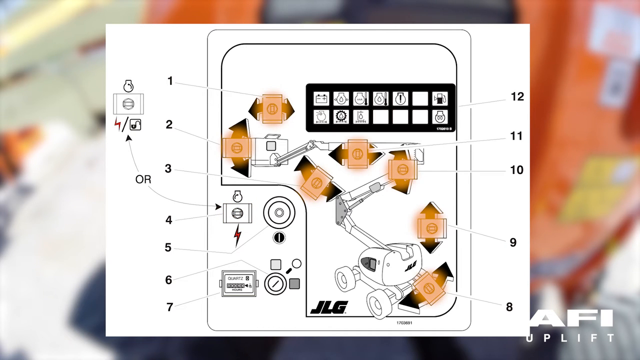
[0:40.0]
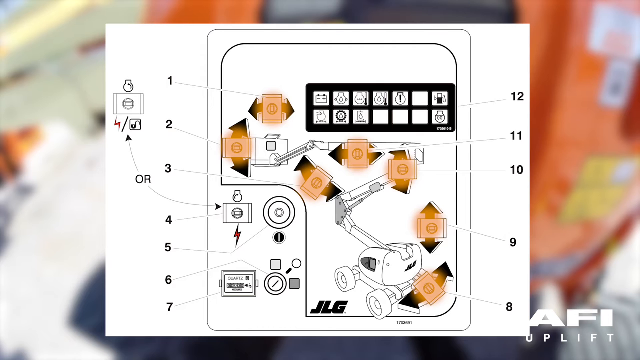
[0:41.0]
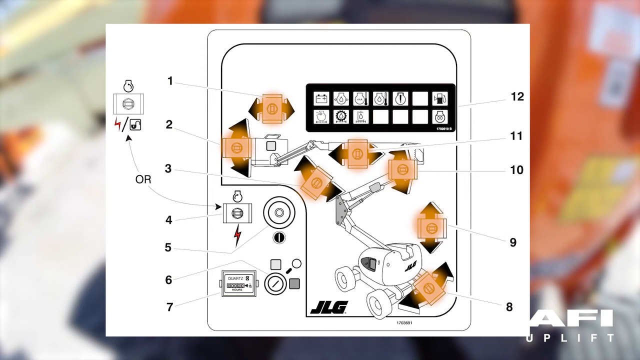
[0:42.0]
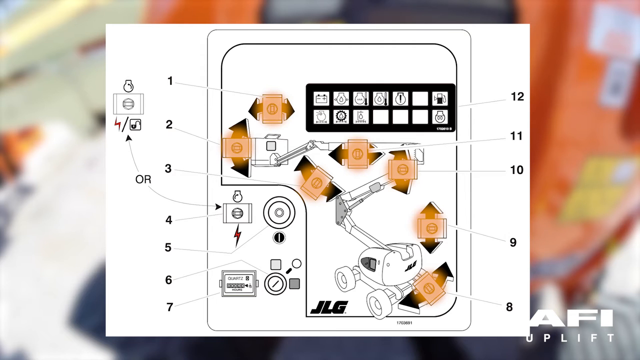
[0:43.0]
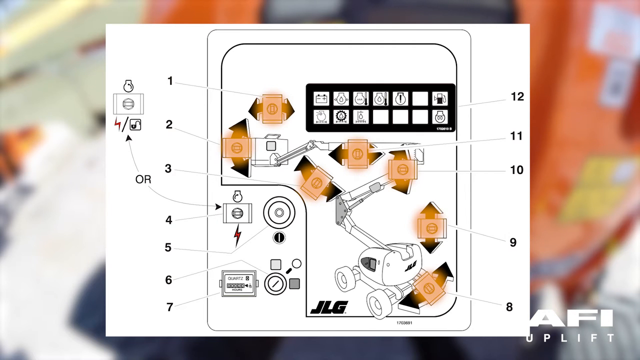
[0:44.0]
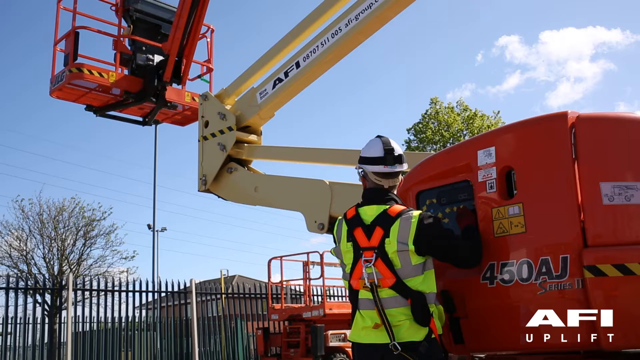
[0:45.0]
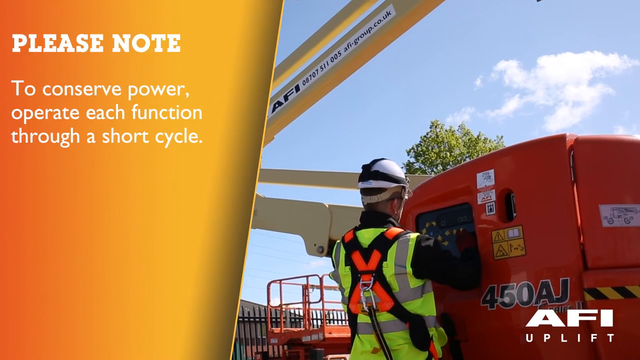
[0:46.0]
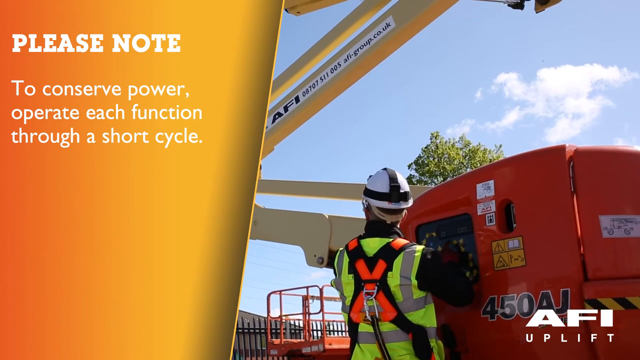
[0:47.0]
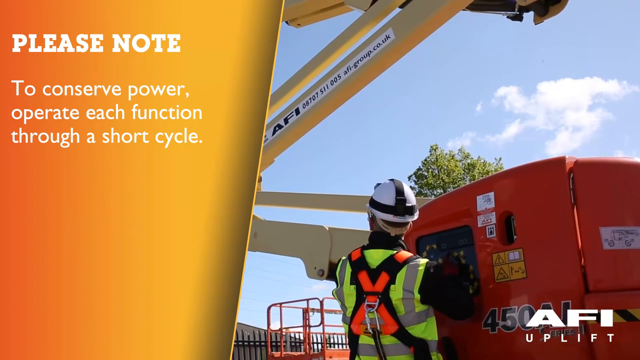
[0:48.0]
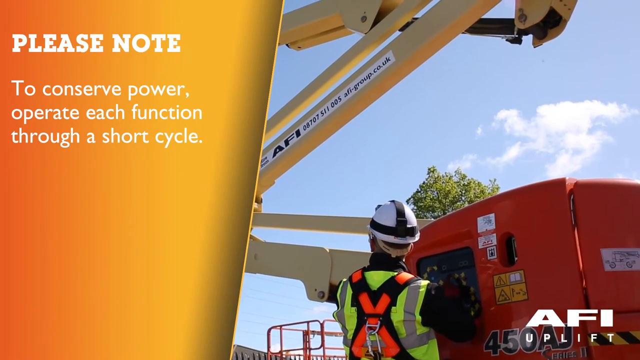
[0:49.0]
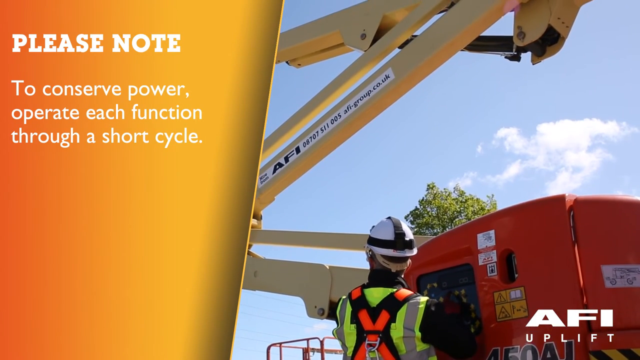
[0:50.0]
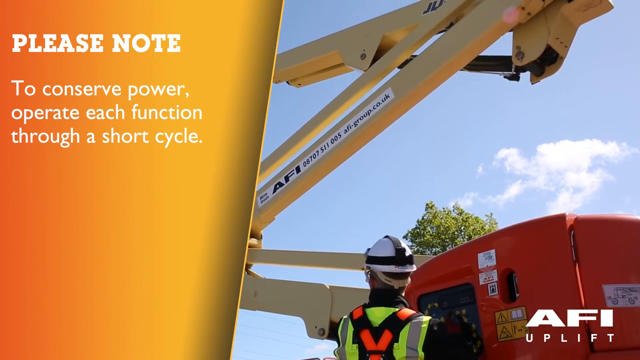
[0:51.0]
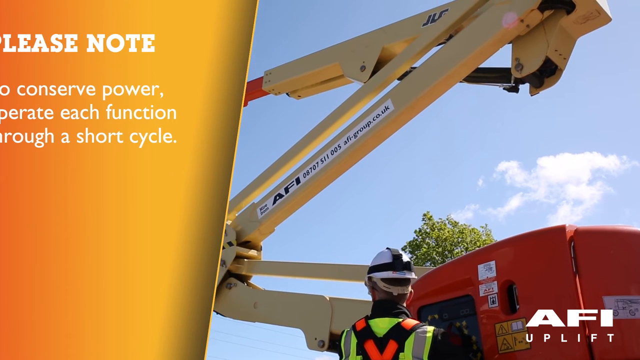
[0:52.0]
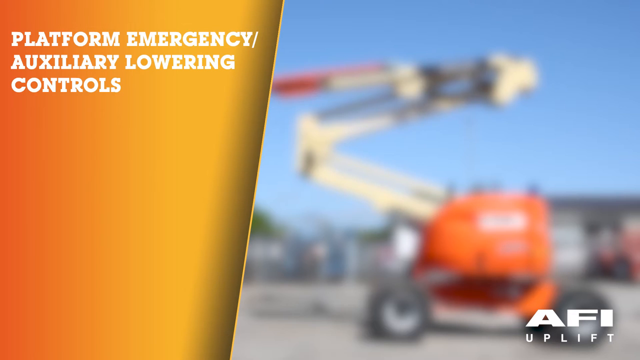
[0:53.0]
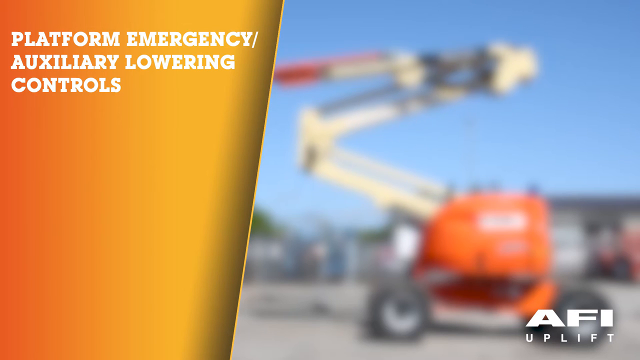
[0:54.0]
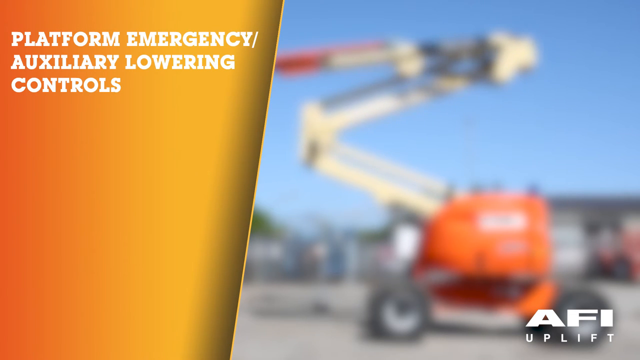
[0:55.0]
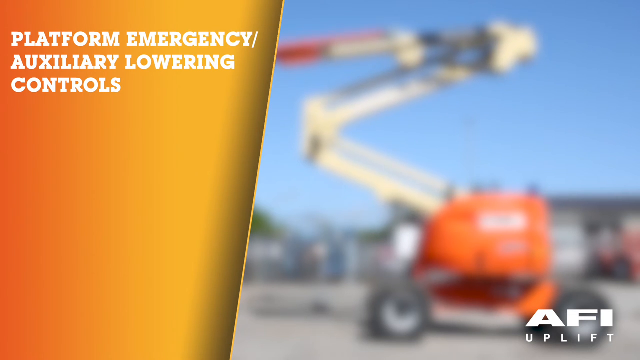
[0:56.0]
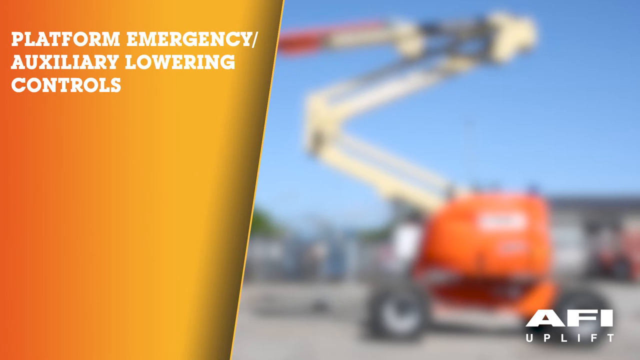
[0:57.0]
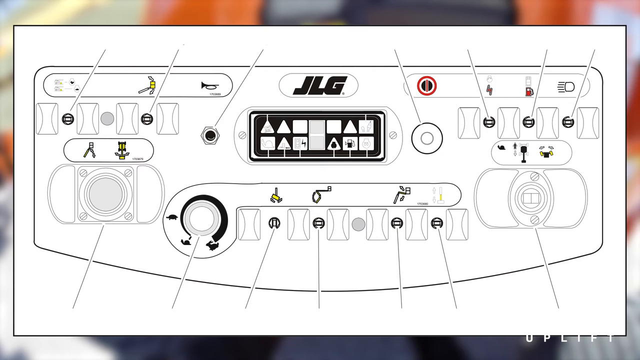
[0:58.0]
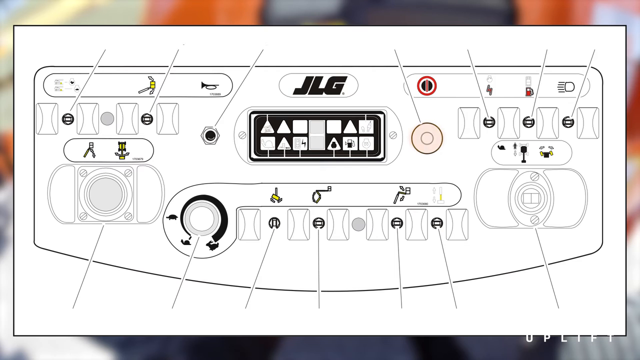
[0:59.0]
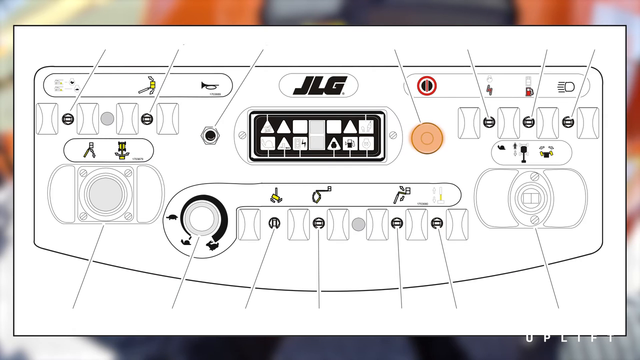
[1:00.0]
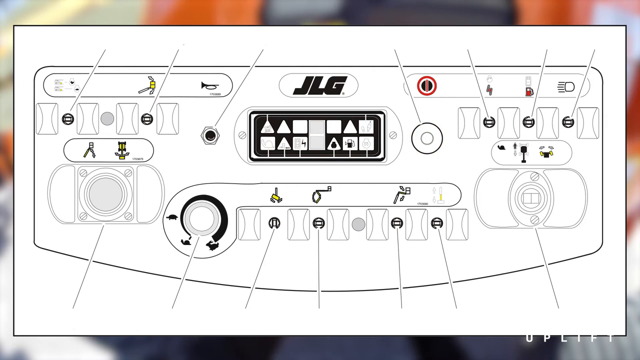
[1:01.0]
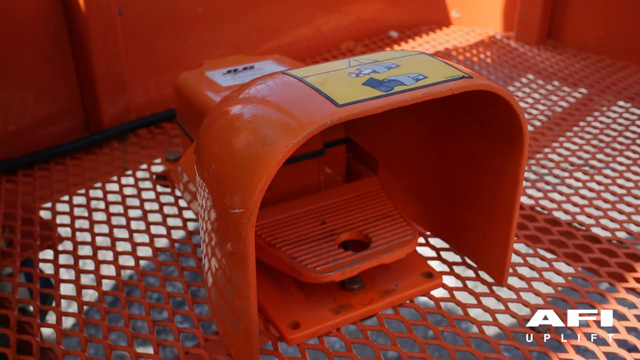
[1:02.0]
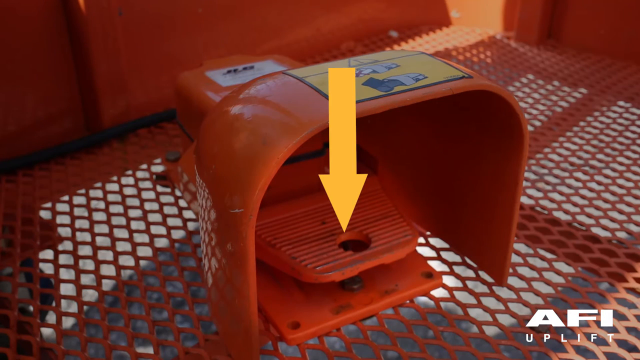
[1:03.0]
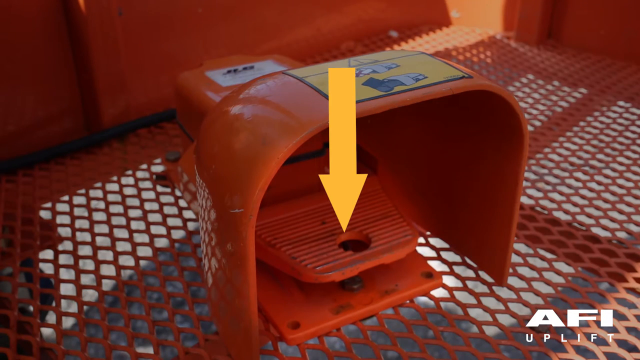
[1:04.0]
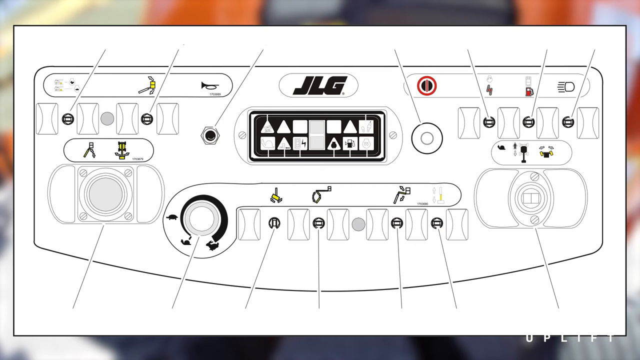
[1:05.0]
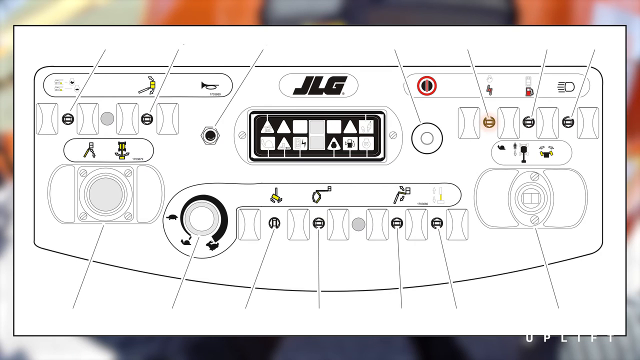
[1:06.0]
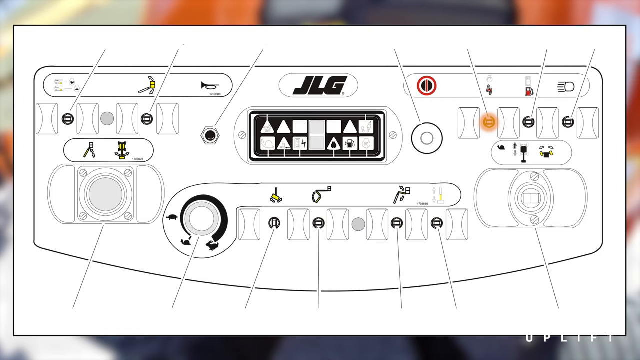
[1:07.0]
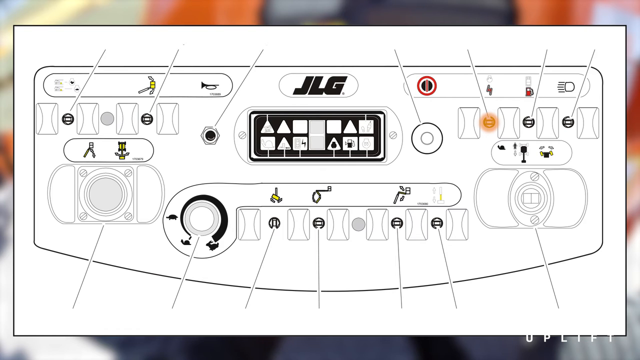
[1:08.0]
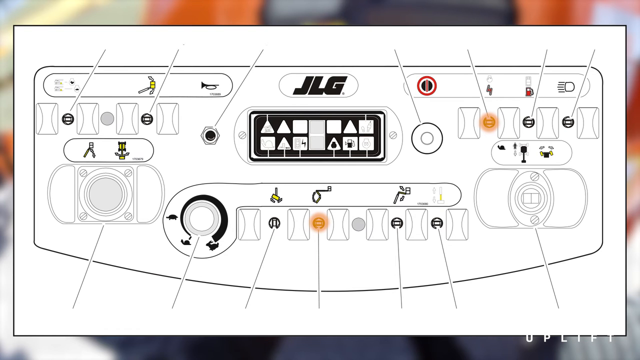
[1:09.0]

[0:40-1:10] The video returns to the safety measures. Someone shows how to lower the controls and exactly what everything on the console does while operating it. There is a place for a hitch in the back. The machine looks very heavy-duty and well-made, and the video is instructional on how to operate it.